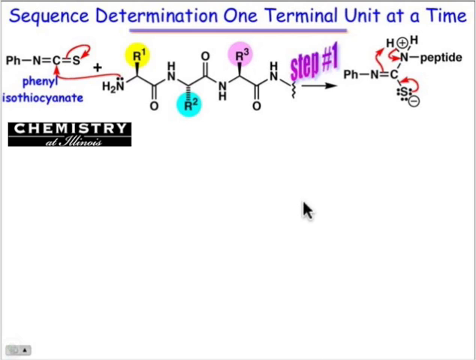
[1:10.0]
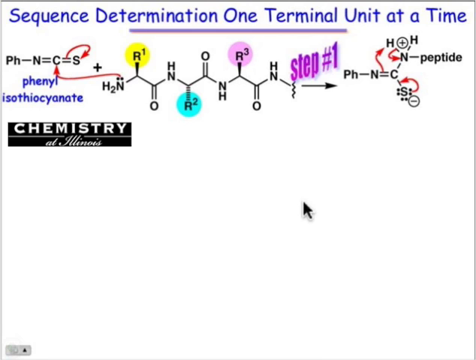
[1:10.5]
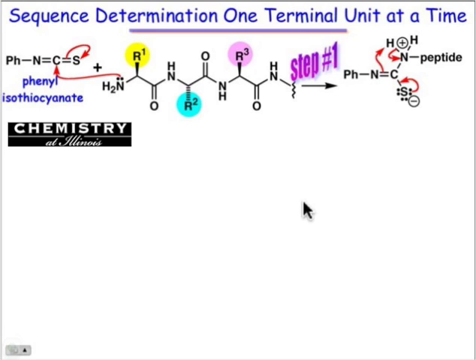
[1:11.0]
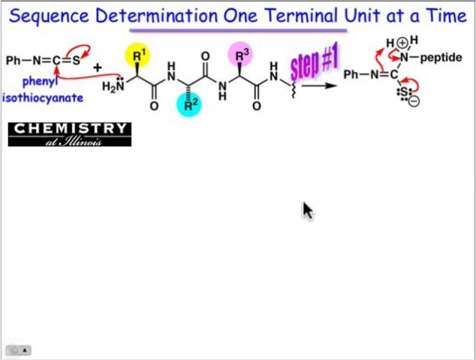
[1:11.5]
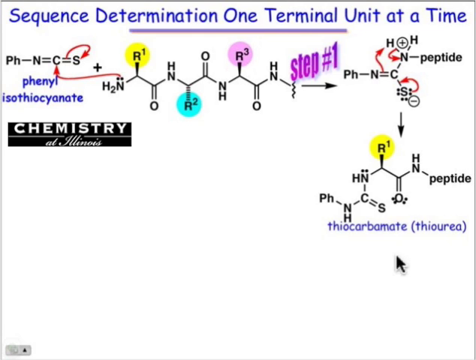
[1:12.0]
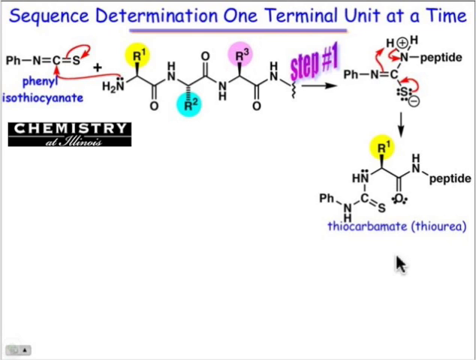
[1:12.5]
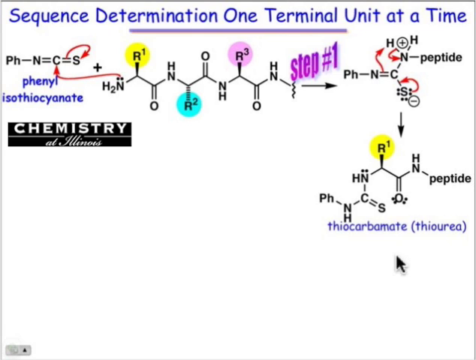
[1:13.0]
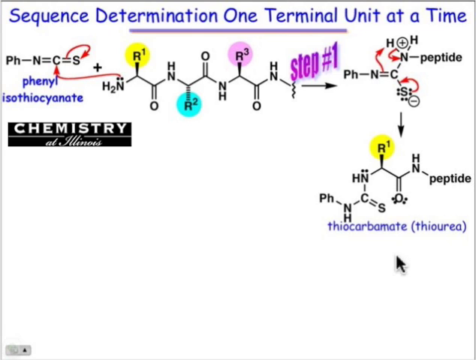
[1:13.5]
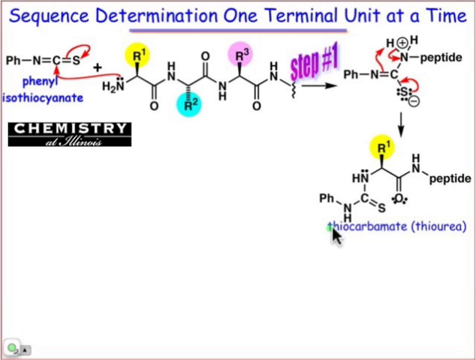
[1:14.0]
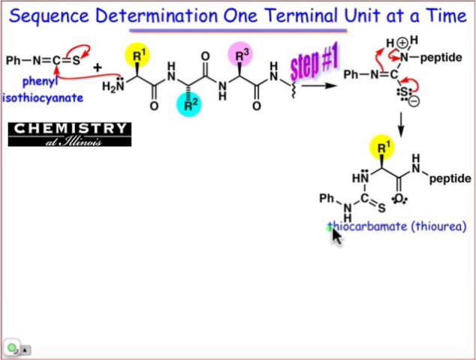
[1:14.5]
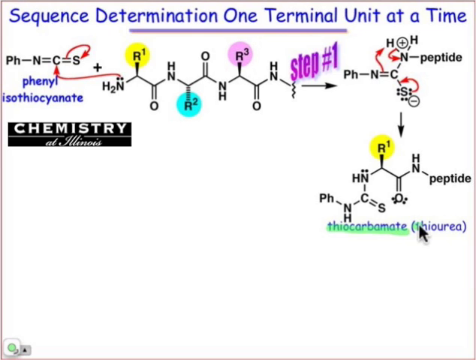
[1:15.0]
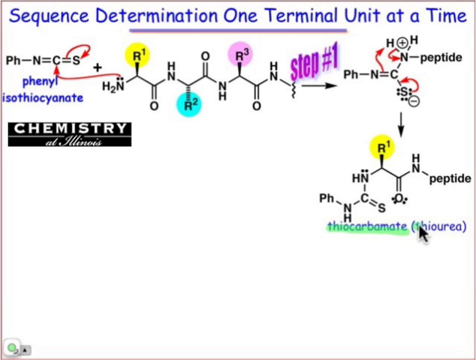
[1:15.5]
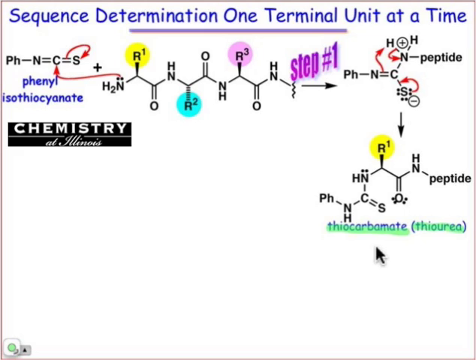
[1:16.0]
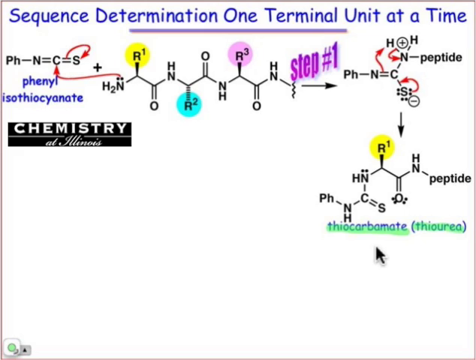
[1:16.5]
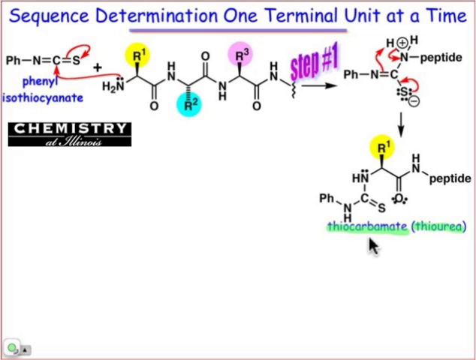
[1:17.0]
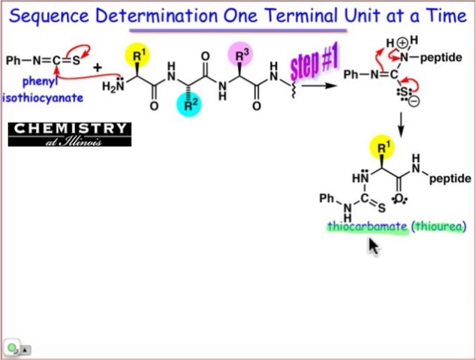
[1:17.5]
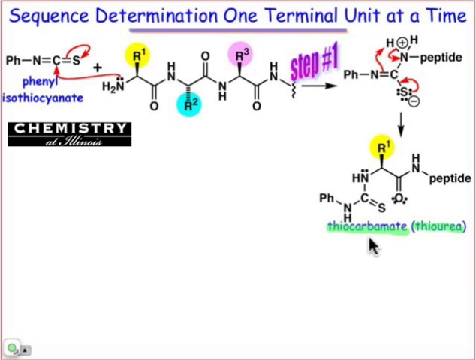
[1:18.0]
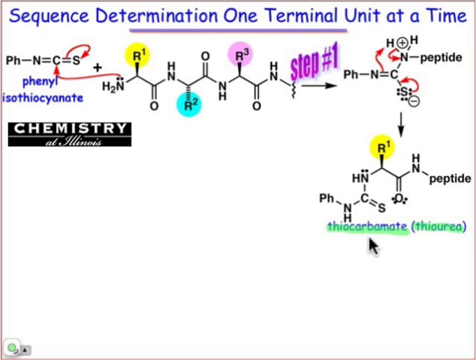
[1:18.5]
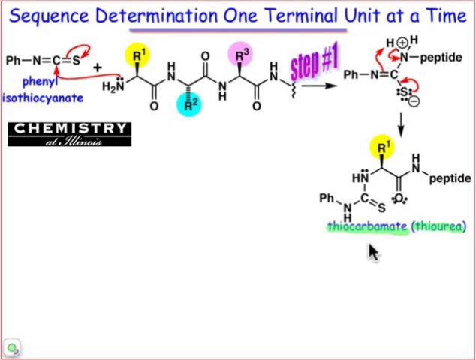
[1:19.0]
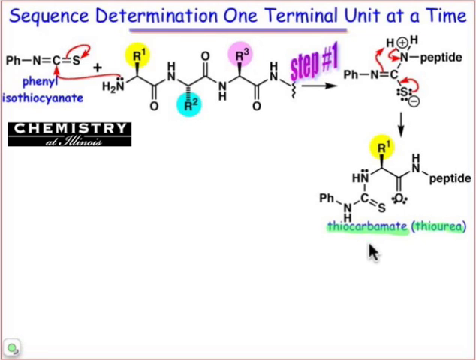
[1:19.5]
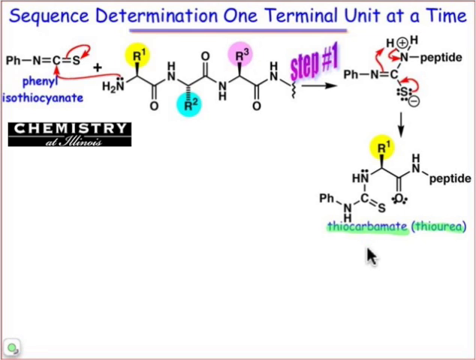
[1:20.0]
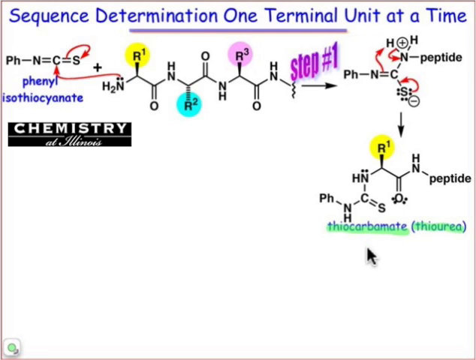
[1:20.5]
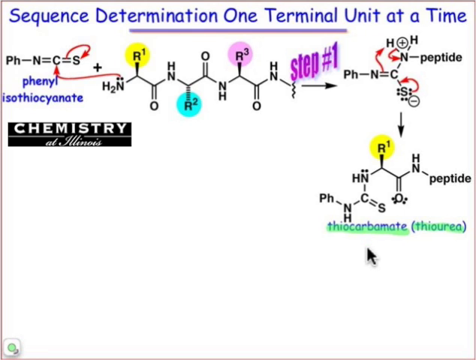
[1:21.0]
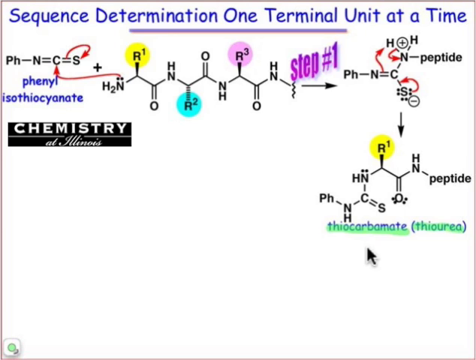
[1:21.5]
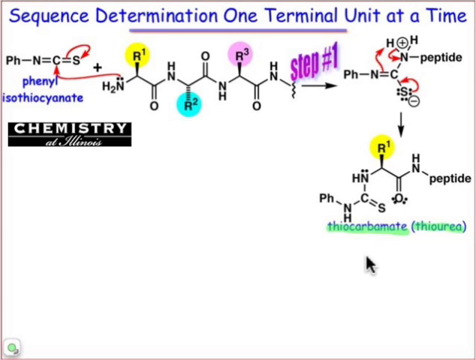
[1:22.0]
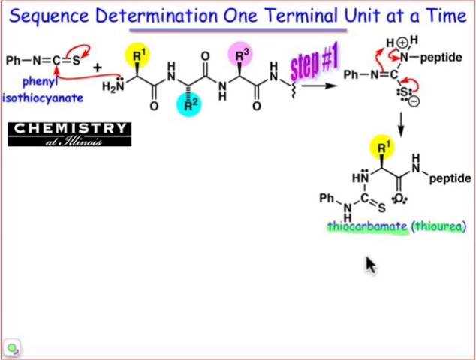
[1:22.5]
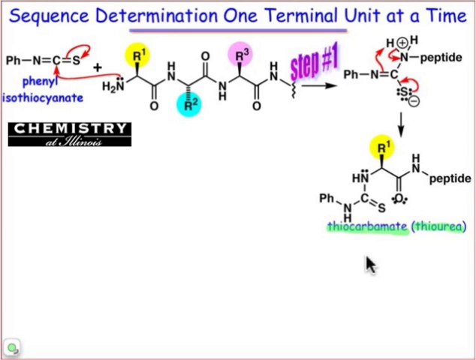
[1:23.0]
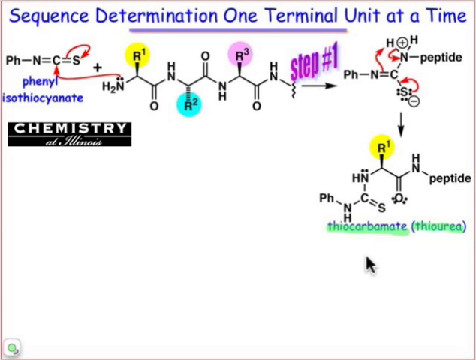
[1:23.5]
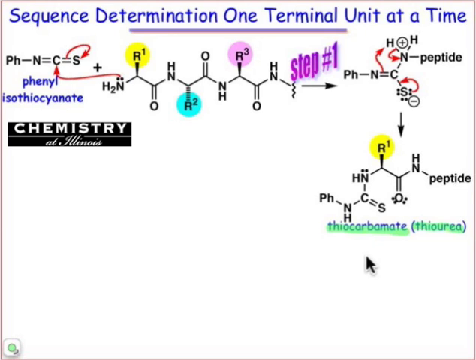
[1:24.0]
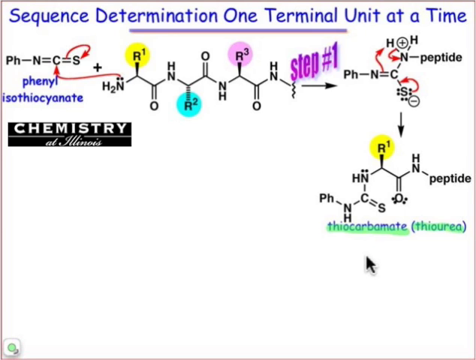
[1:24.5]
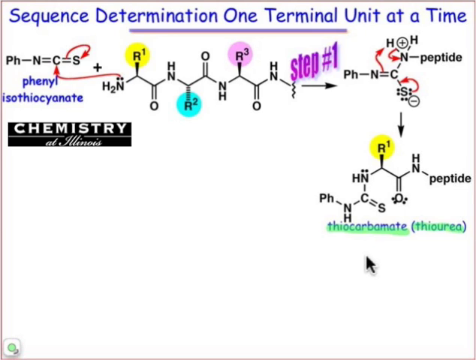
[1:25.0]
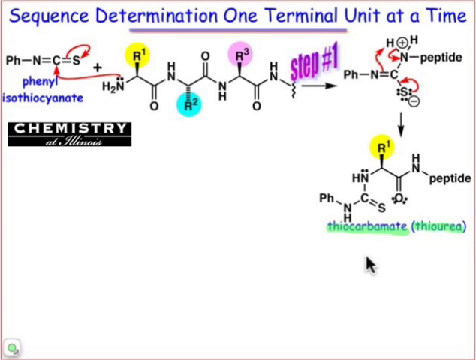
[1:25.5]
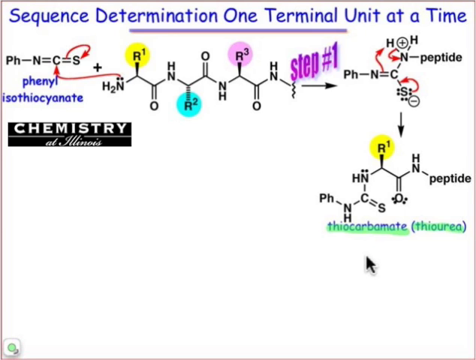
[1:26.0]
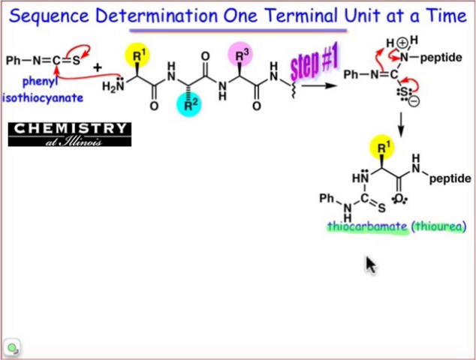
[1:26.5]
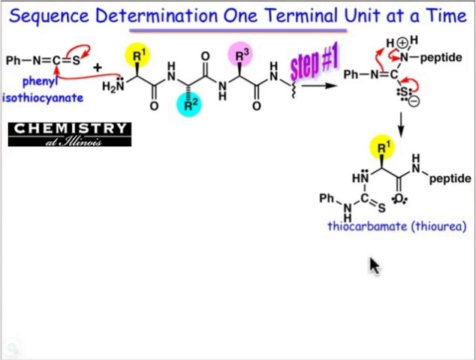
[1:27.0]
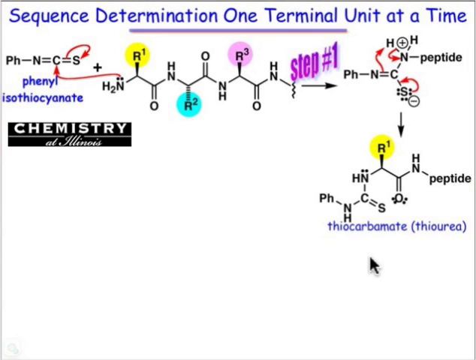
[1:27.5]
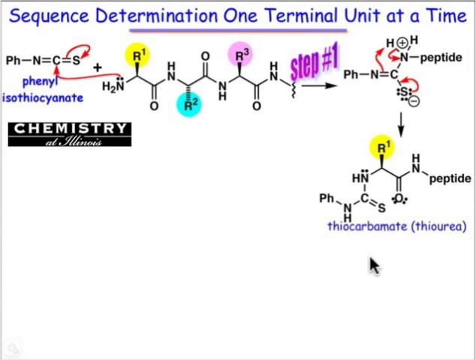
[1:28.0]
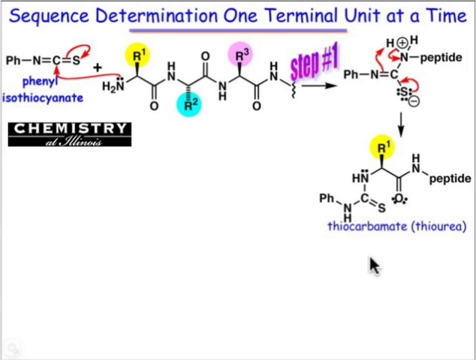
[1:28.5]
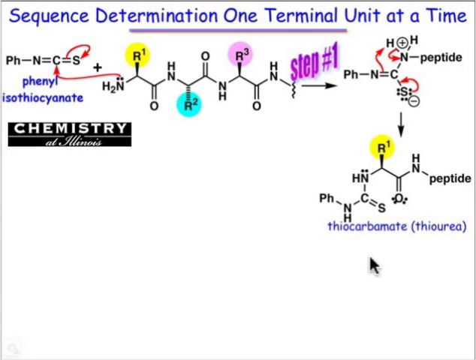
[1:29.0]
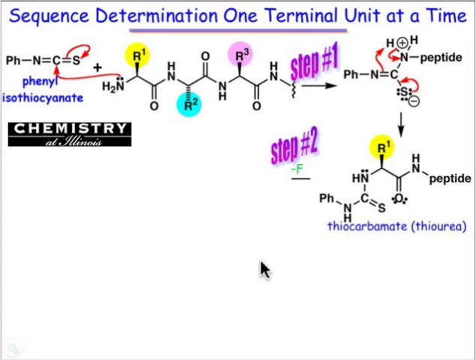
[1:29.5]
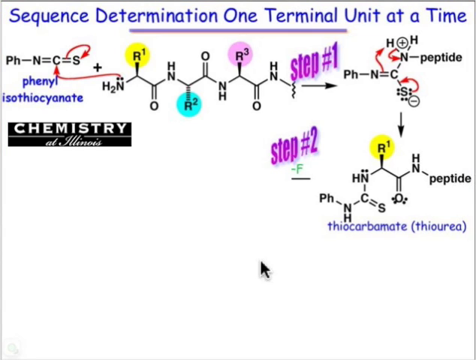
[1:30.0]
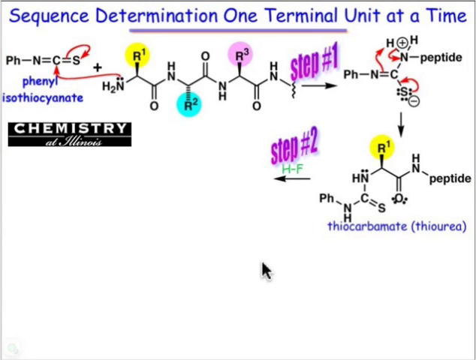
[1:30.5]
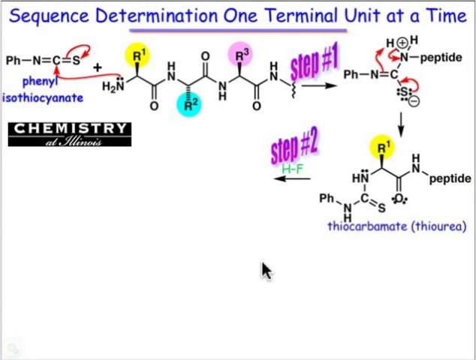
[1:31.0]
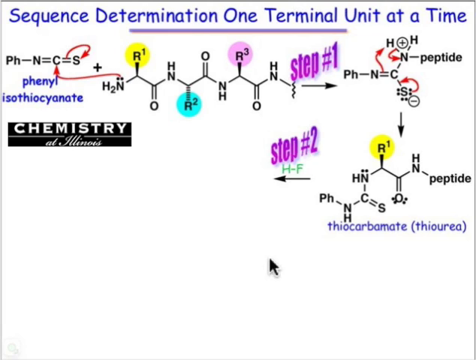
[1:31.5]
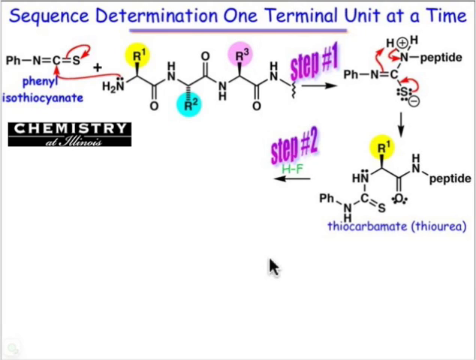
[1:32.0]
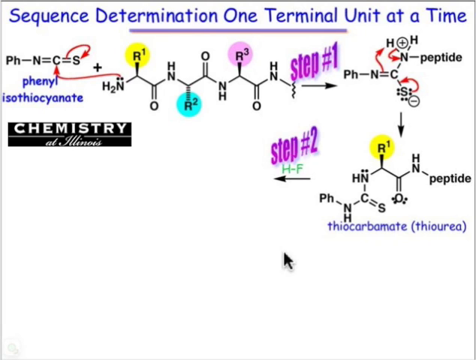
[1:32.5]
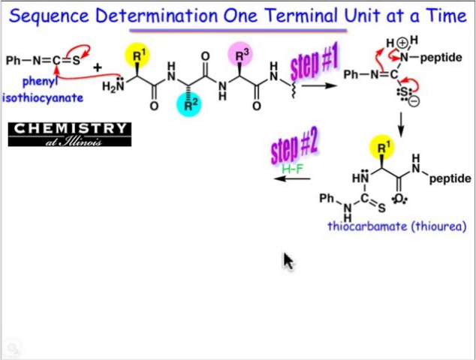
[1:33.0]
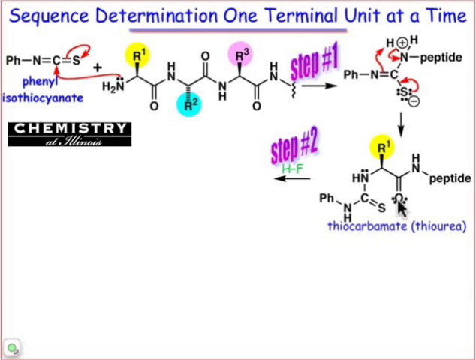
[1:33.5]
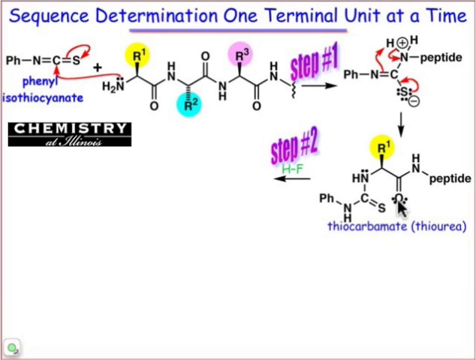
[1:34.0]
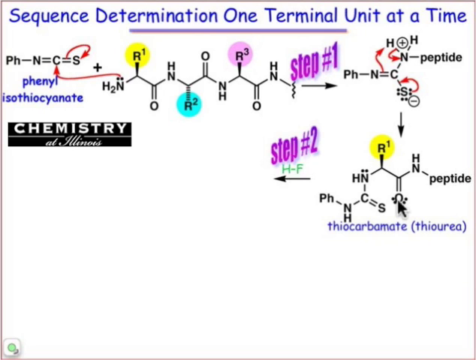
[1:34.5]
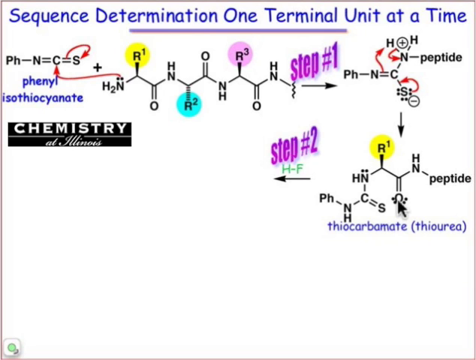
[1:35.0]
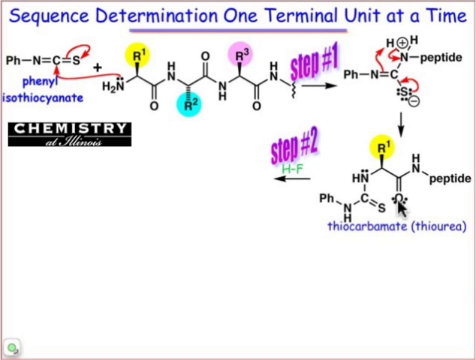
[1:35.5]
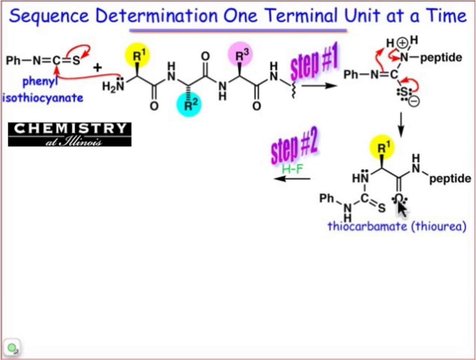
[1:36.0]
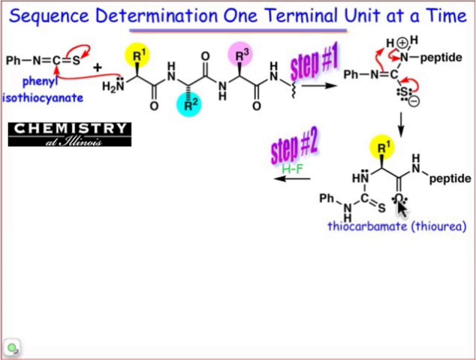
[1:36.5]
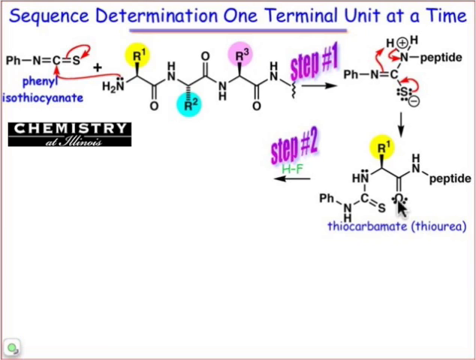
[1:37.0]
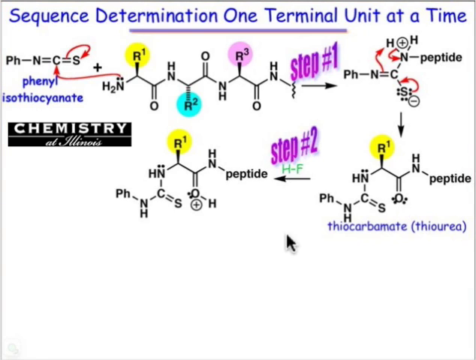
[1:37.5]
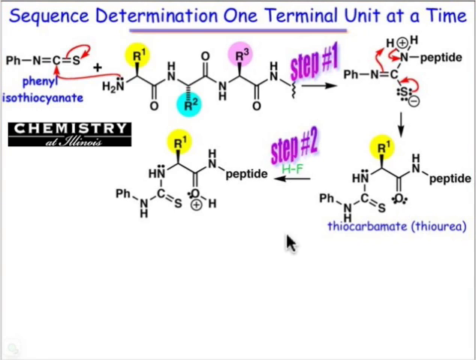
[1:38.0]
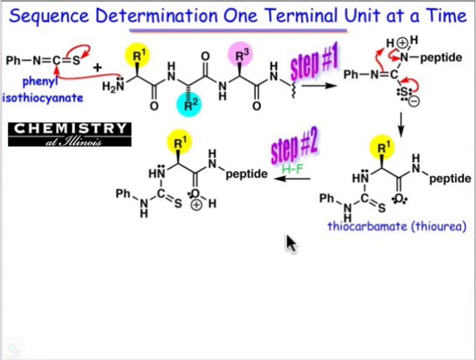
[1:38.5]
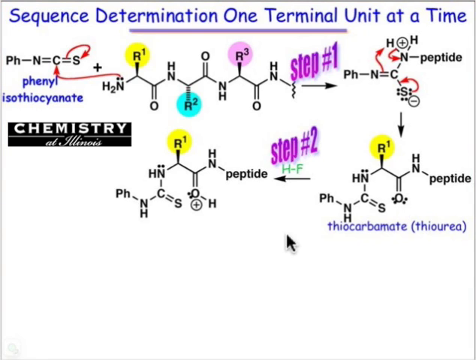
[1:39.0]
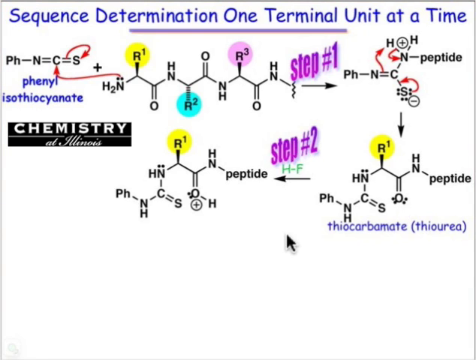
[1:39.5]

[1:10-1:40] A chemistry teacher's computer screen is shared, with a white background. Across the top, cobalt blue text says "Sequence determination, one terminal unit at a time." Directly beneath that, at the center top of the screen, a purple line runs from left to right. Directly beneath that on the left is black text that says "PH-N=C=S." A red arrow is drawn from the equal sign, moving over and pointing to the S. That is followed by a plus sign and then a chain sequence of phenol isothiocyanate that reads H2N, goes up to R1 inside a yellow circle, down to O, up to HN, down to R2 inside a blue circle, up to O, down to NH, up to R3 inside a pink circle, down to O, up to HN, then down to a bit of a squiggle, with purple text that says "Step number one." Directly beneath that is a black directional arrow pointing to the right, followed by black text that says "PH-N=C." A red arrow points up from the equal sign to an H, then "plus H," then down to an N, then "minus peptide." Directly beneath that on the left is a rectangular bar with white text that says "Chemistry at Illinois," and directly above it is blue text that says "Phenol isothiocyanate."